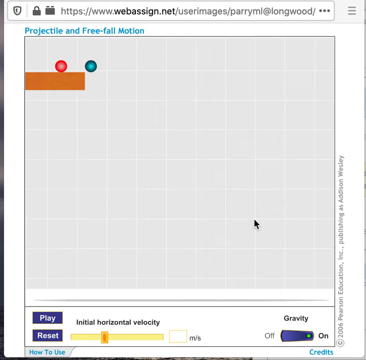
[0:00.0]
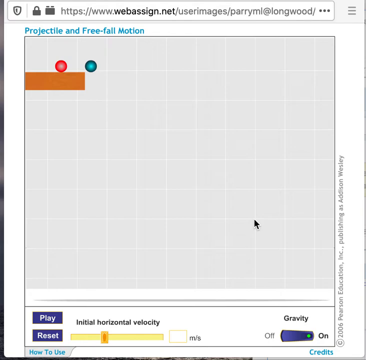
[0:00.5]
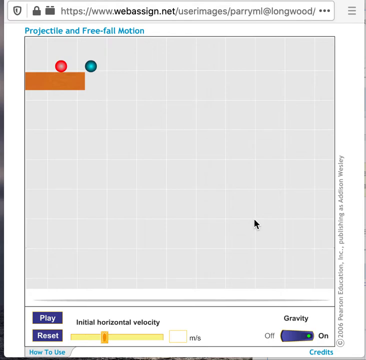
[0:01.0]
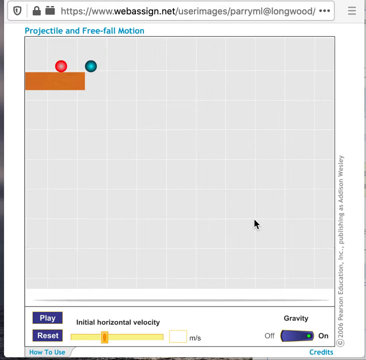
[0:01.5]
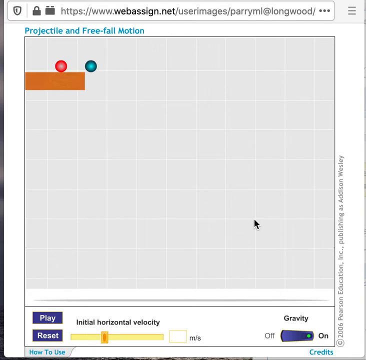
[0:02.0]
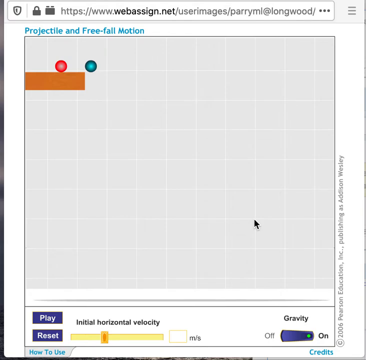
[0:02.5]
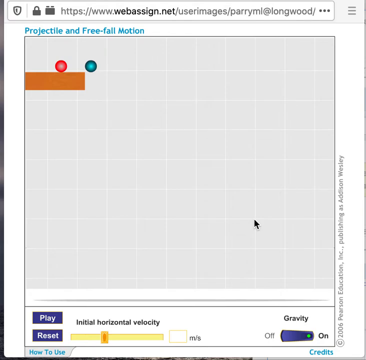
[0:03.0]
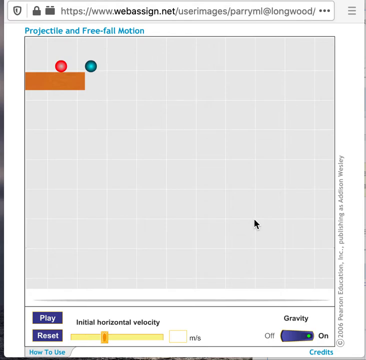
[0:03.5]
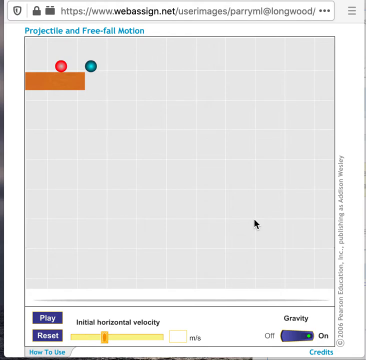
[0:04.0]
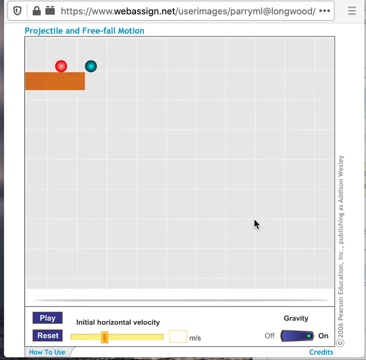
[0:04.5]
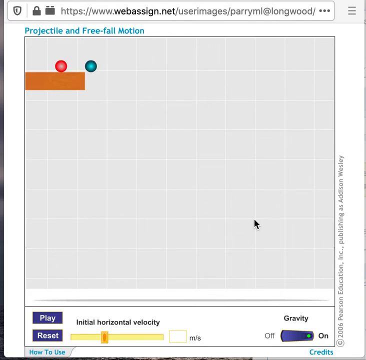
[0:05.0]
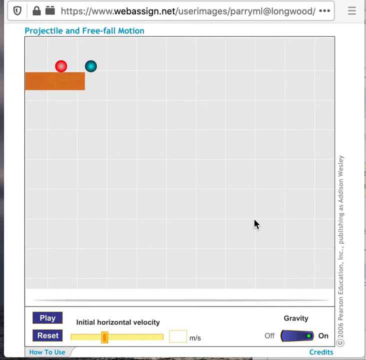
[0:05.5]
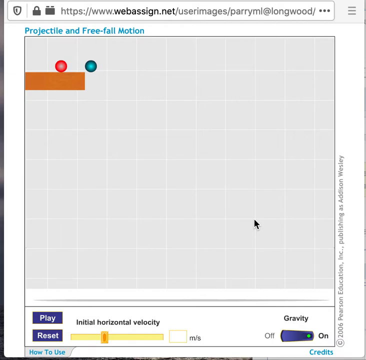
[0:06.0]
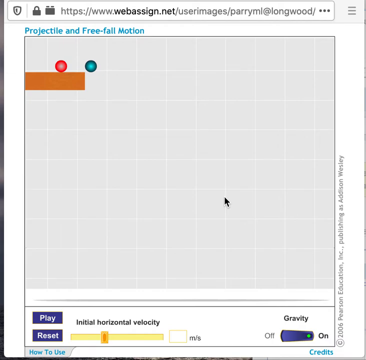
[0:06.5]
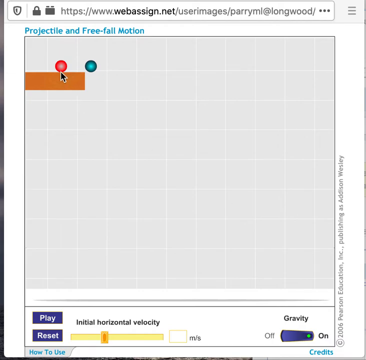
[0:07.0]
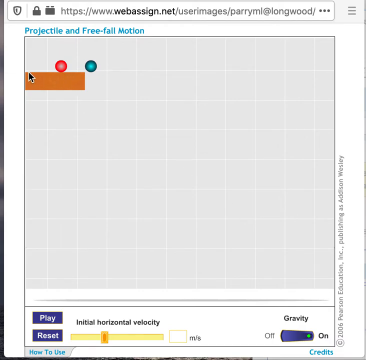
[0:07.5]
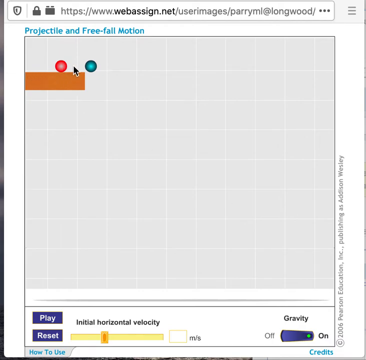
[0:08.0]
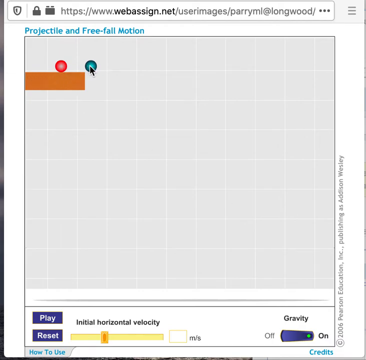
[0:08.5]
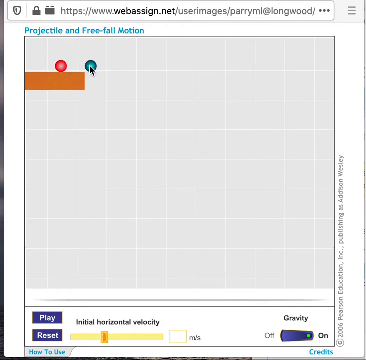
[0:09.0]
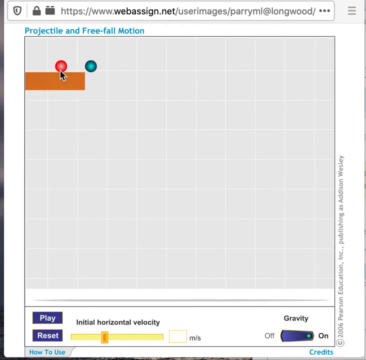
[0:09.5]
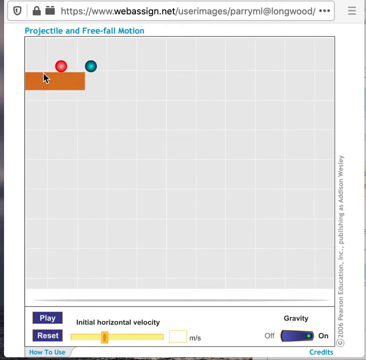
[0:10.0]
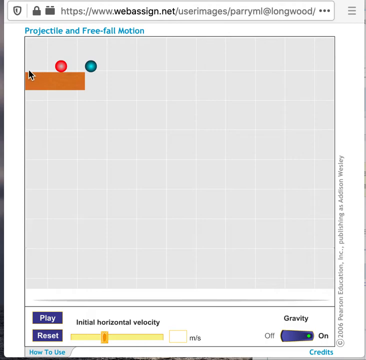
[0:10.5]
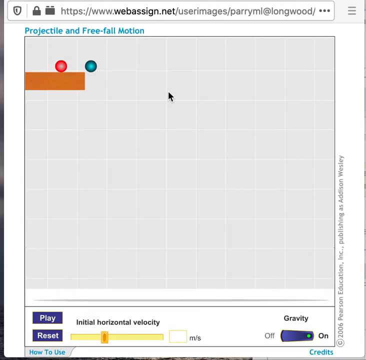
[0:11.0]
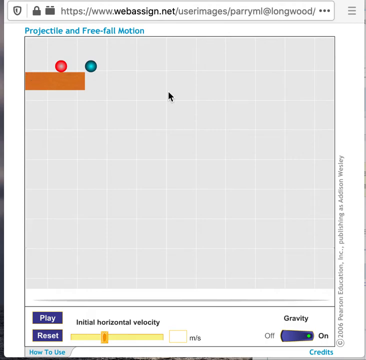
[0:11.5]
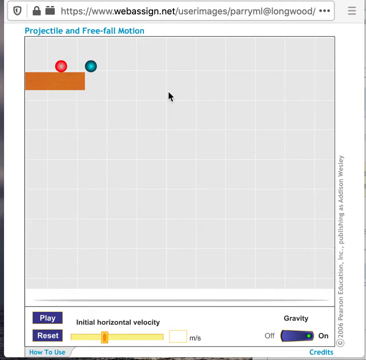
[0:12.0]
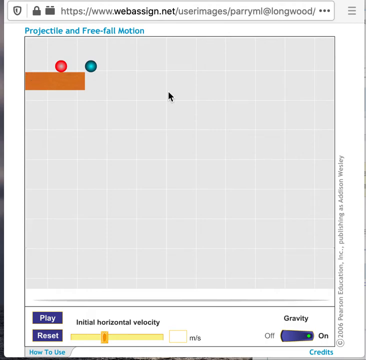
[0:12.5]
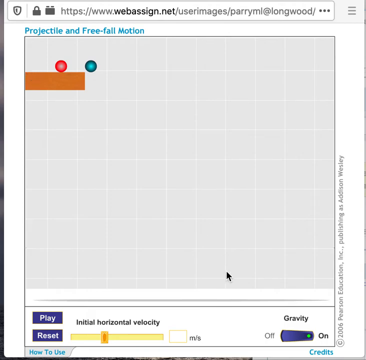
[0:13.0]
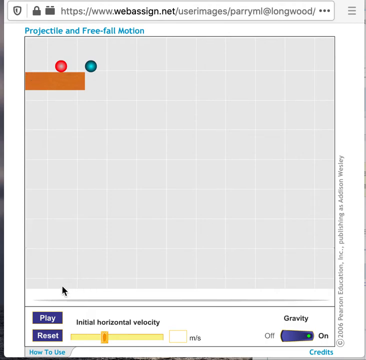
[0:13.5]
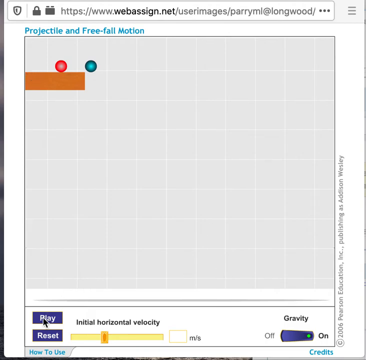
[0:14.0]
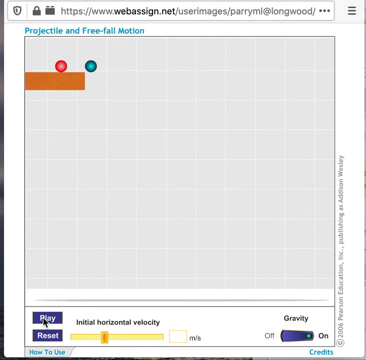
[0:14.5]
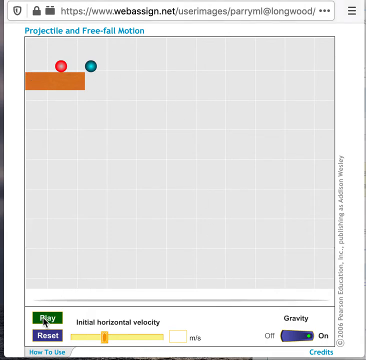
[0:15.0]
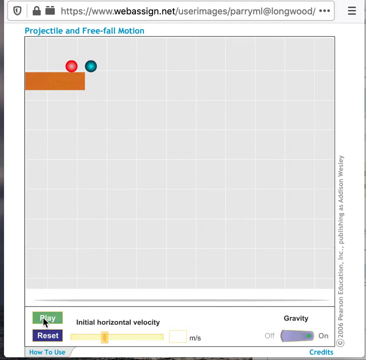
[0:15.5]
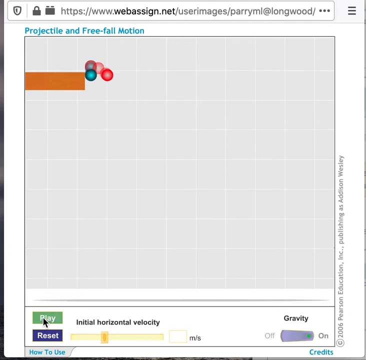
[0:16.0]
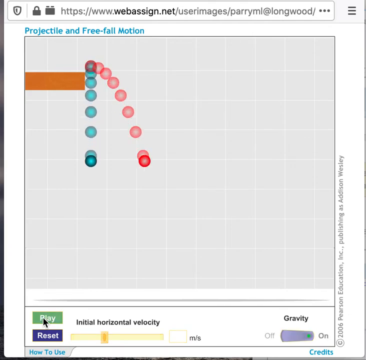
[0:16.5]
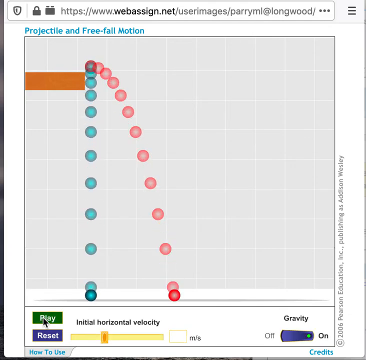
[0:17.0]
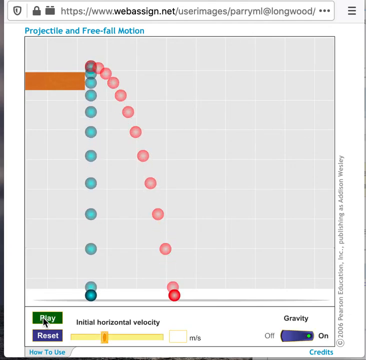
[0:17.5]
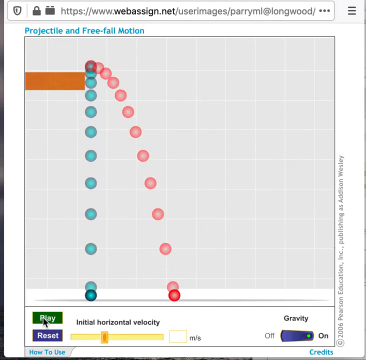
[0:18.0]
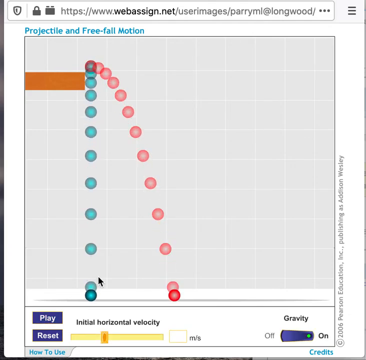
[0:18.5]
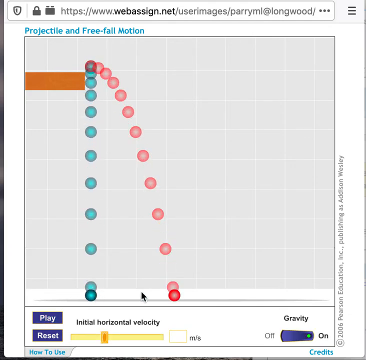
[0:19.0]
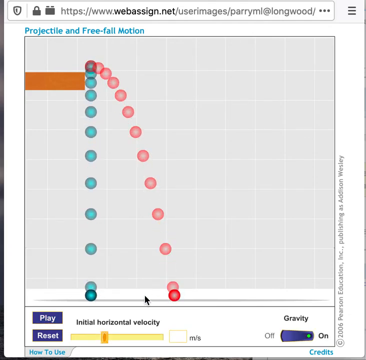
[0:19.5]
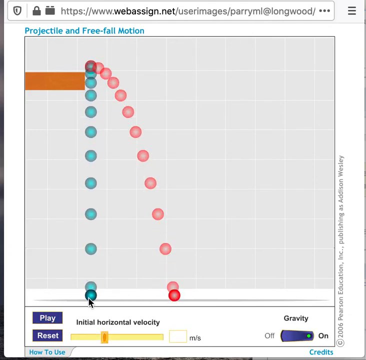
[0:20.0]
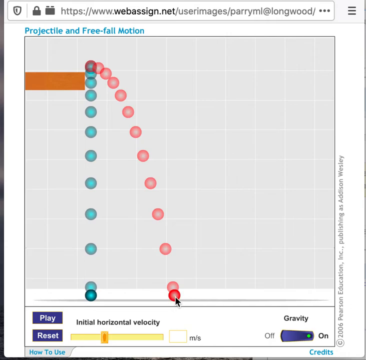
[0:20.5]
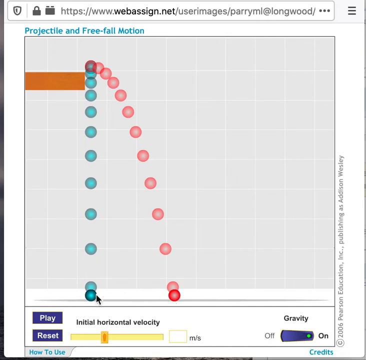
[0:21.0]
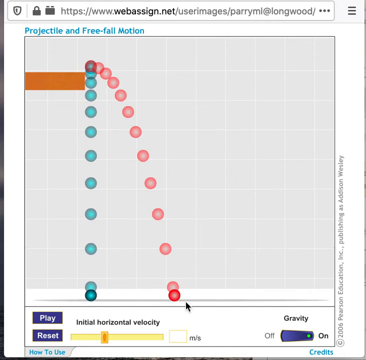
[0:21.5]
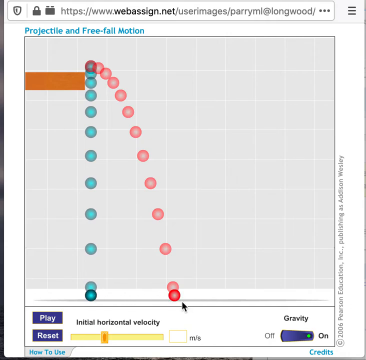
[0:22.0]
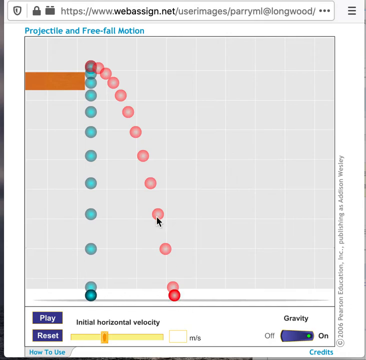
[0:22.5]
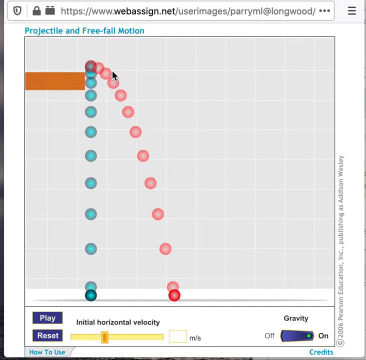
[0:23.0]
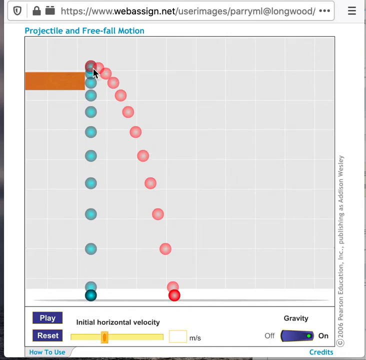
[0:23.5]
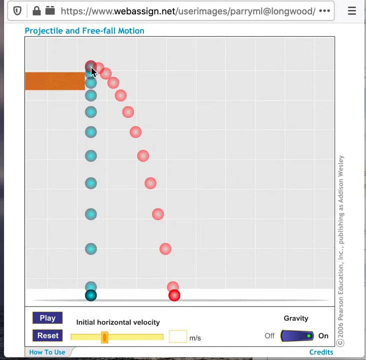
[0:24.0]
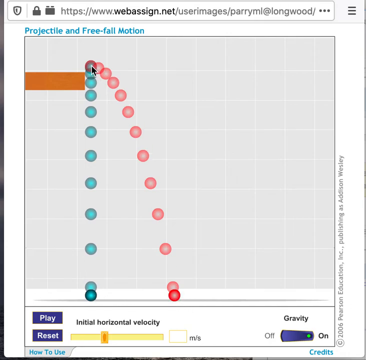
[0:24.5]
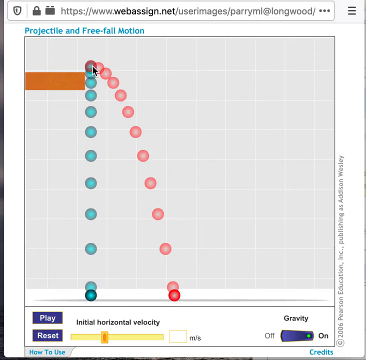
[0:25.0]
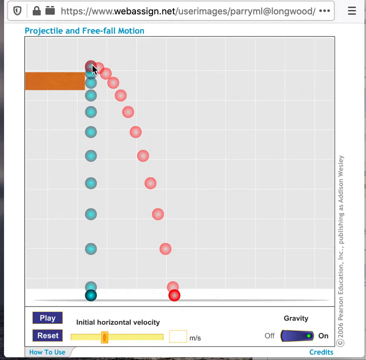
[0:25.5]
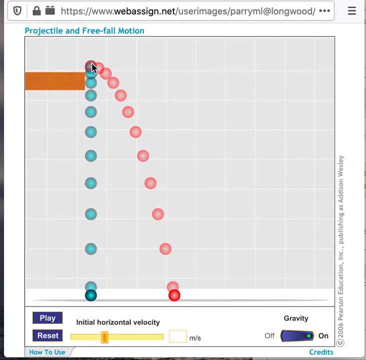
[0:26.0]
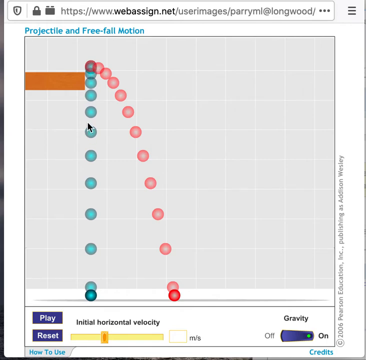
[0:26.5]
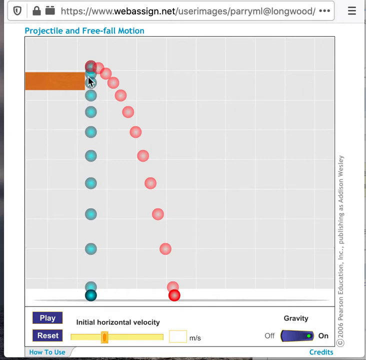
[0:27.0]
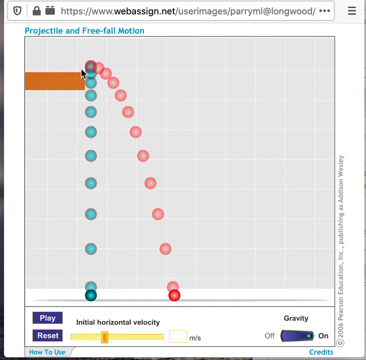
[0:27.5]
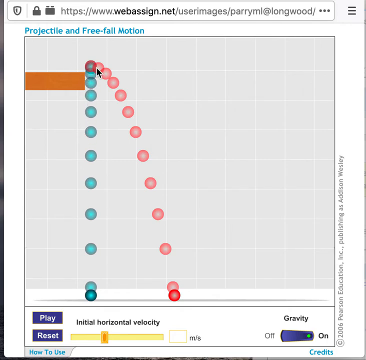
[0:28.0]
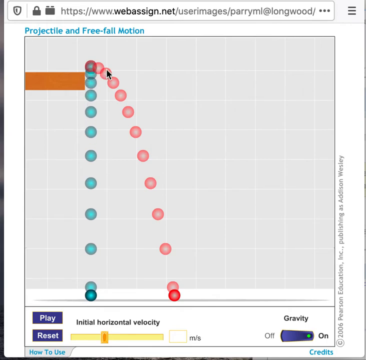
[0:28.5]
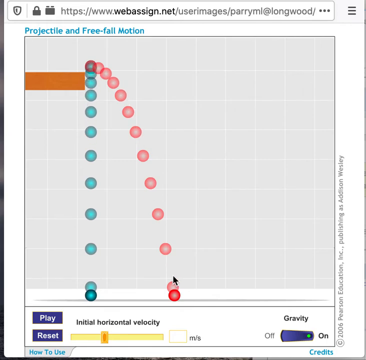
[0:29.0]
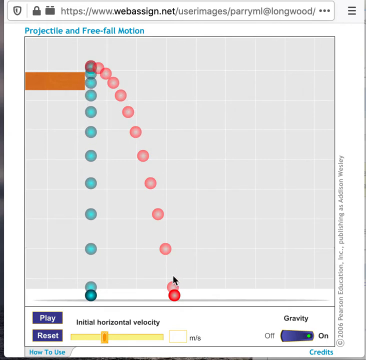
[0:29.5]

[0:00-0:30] At the very top, a search bar reads "www.webasign.net\user images". Below it is a screen made up of small light gray squares, and above the top left corner of that screen, "projectile and free fall motion" is written in blue. Along the bottom of the screen is a blue square with the word "play" in it, and beneath that a blue square with the word "reset". To the right of these is a line with a dark yellow vertical line over top of it, and above that line are the words "initial horizontal velocity". To the right is a box outlined in white, followed by "M-S". In the bottom right-hand corner is a blue rectangle with "off" on its left side and "on" on its right side; above it in black is the word "gravity", and below it in light blue is the word "credits". In the top left-hand corner of the screen itself is a brown rectangle with a red ball and a green ball on top of it. A pointer moves up to the balls, pointing them out, then comes down and hits play. The red ball and the blue ball fall off the rectangle down to the bottom of the page.